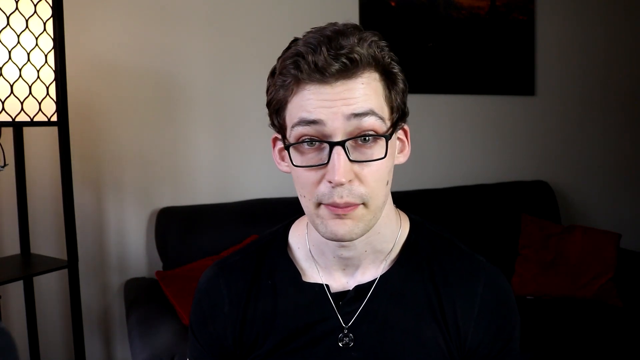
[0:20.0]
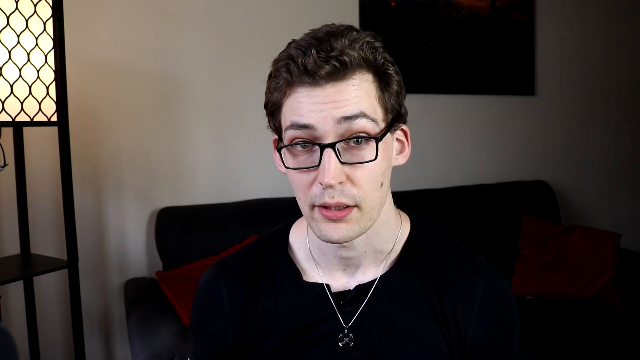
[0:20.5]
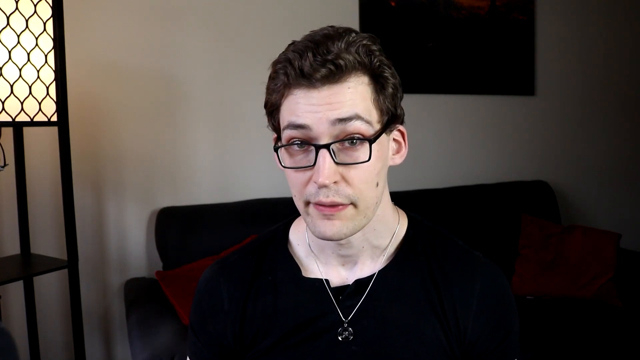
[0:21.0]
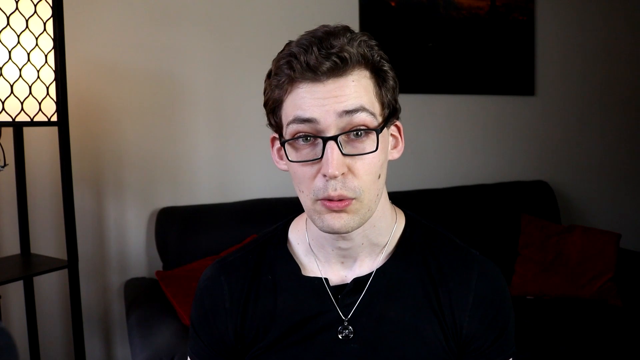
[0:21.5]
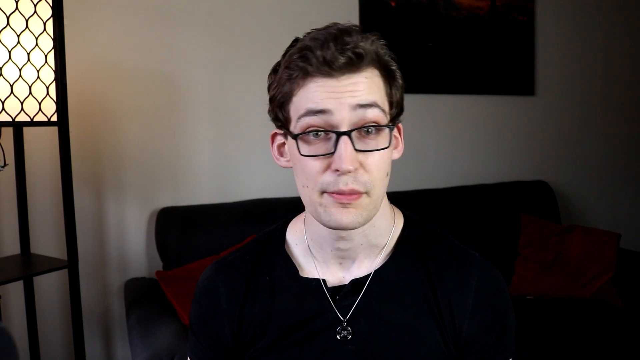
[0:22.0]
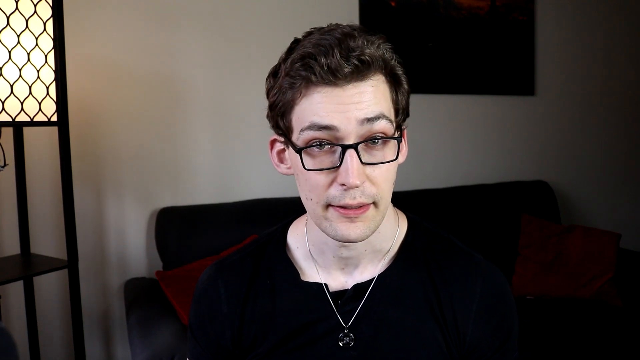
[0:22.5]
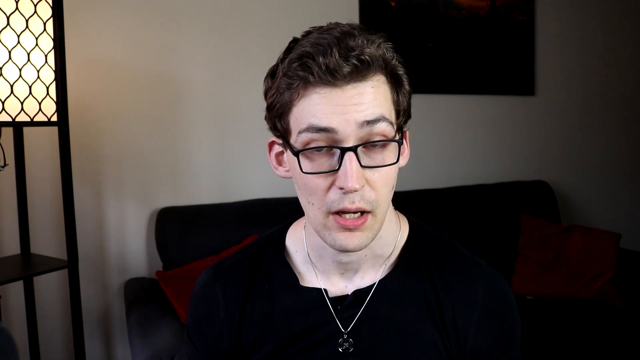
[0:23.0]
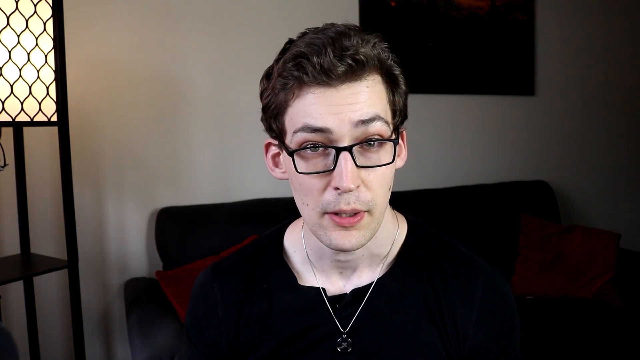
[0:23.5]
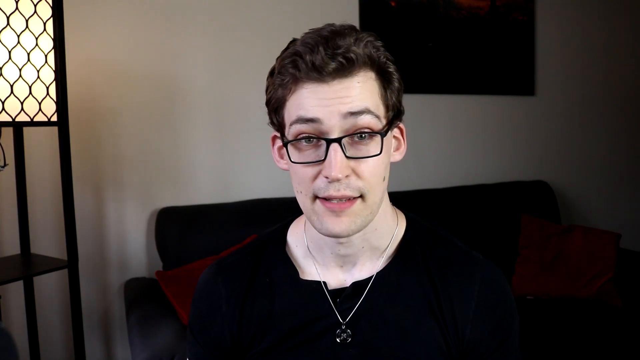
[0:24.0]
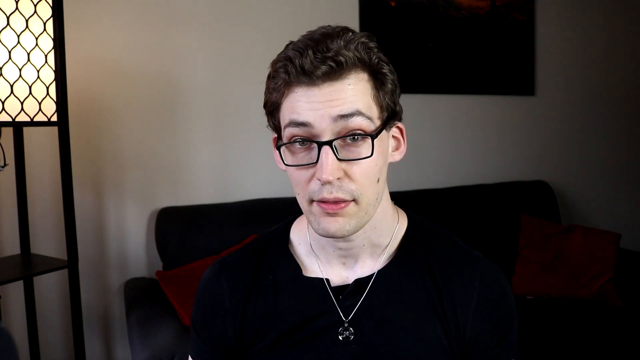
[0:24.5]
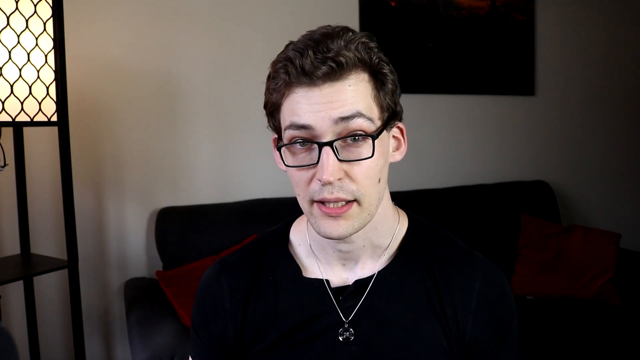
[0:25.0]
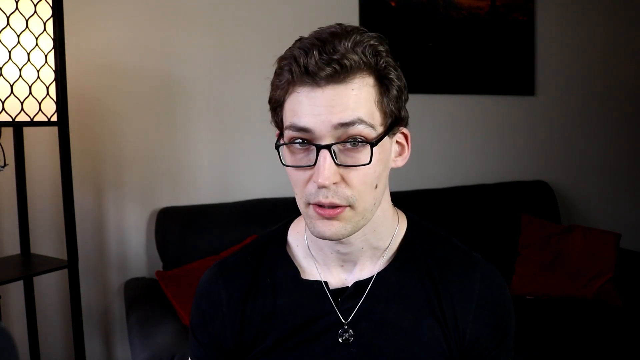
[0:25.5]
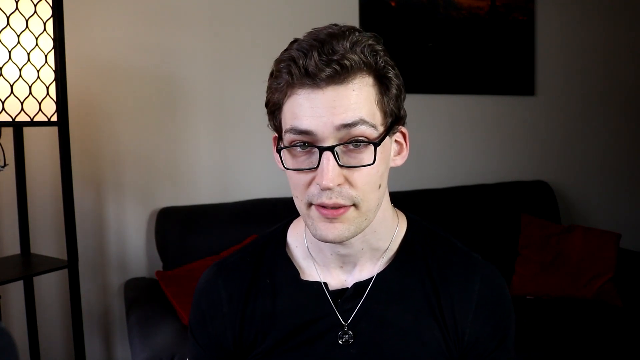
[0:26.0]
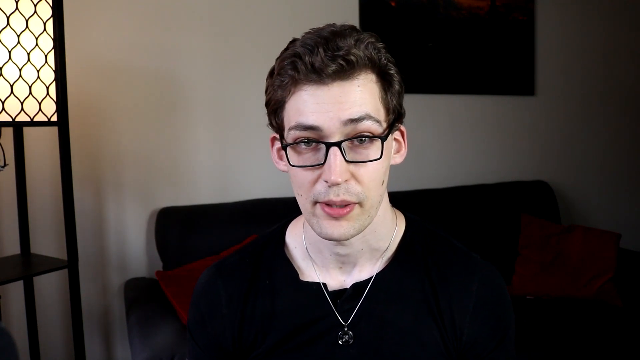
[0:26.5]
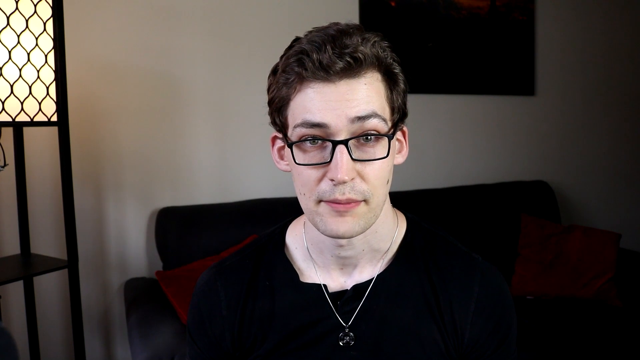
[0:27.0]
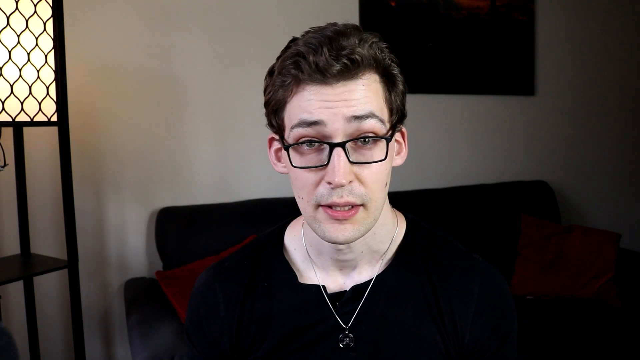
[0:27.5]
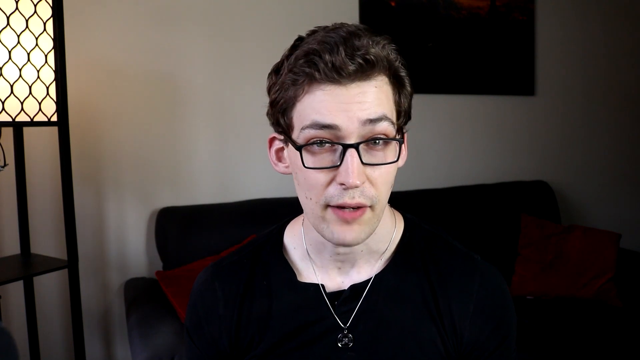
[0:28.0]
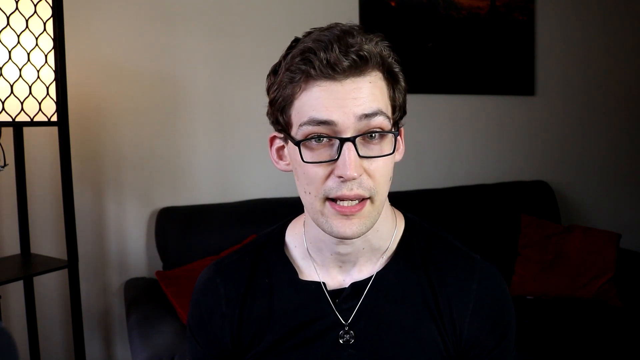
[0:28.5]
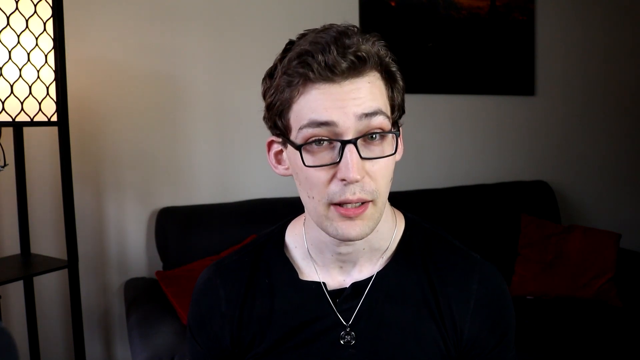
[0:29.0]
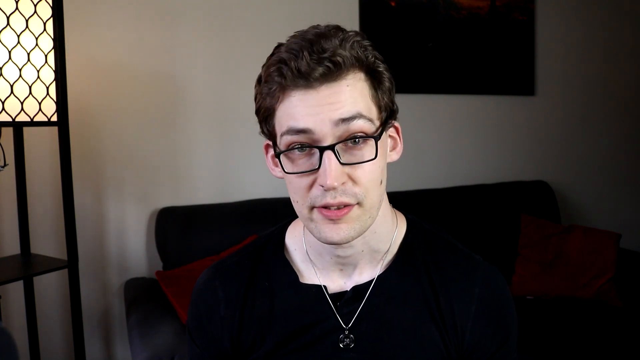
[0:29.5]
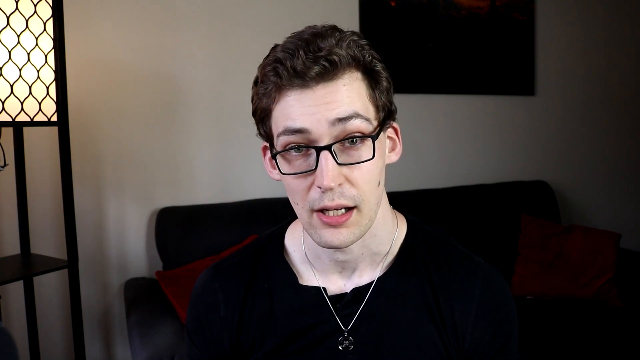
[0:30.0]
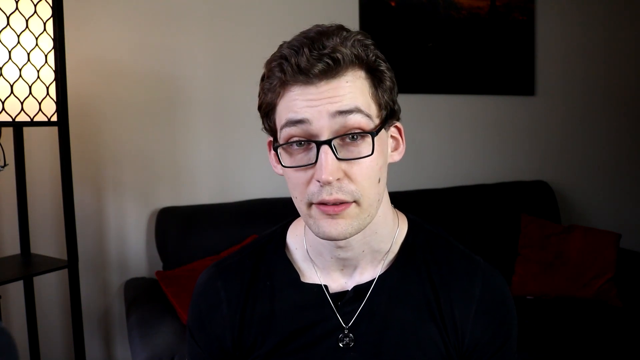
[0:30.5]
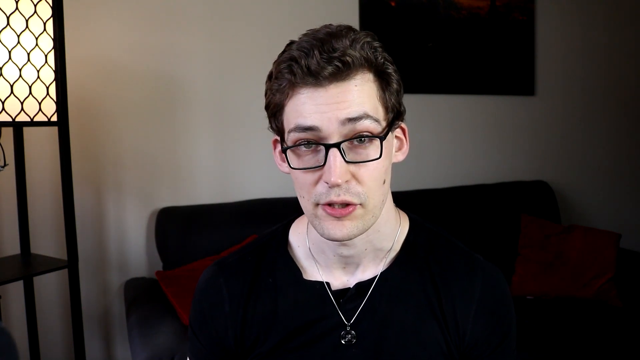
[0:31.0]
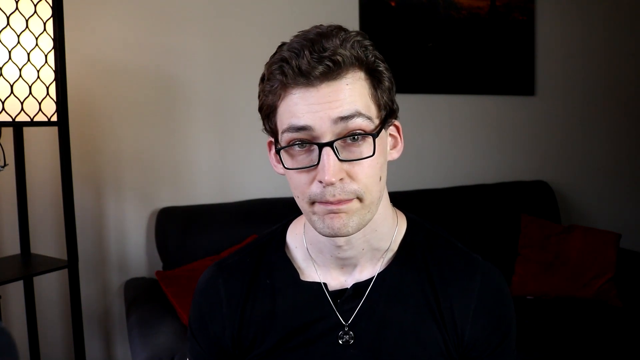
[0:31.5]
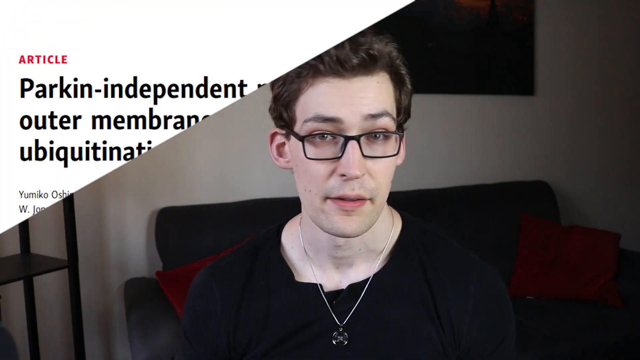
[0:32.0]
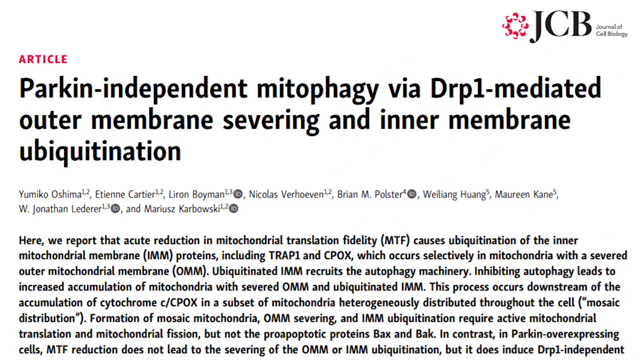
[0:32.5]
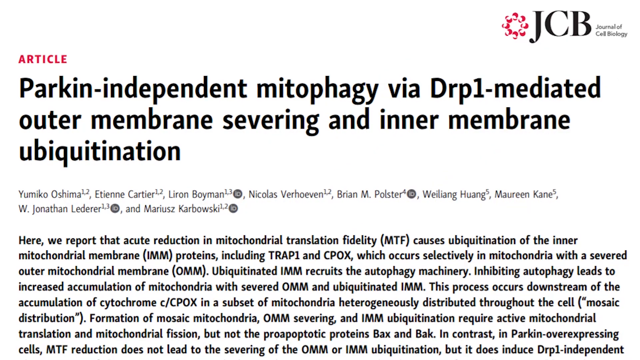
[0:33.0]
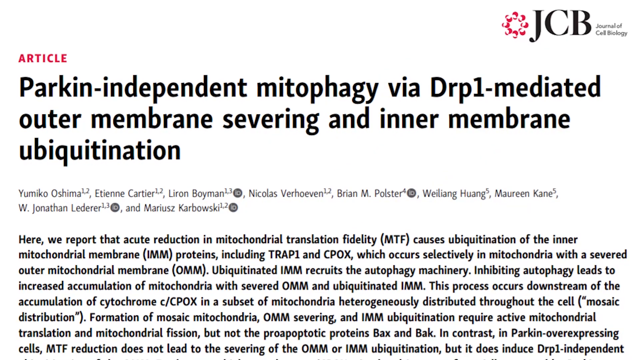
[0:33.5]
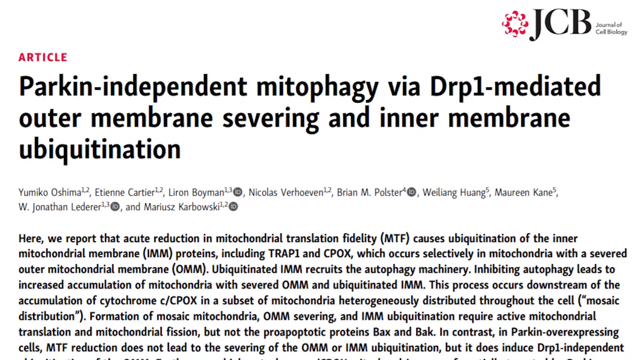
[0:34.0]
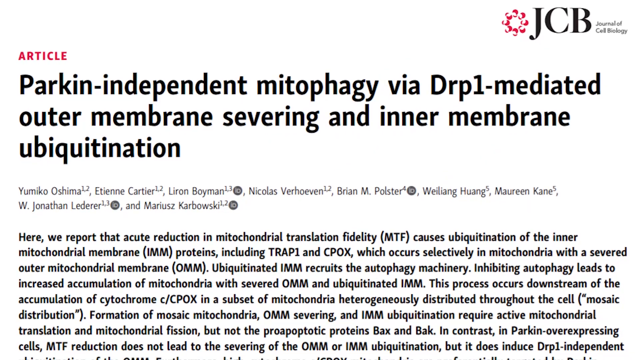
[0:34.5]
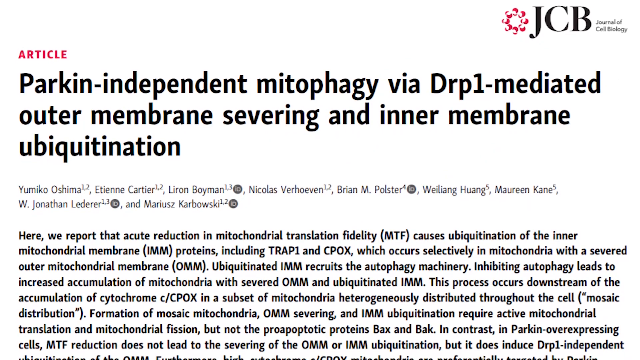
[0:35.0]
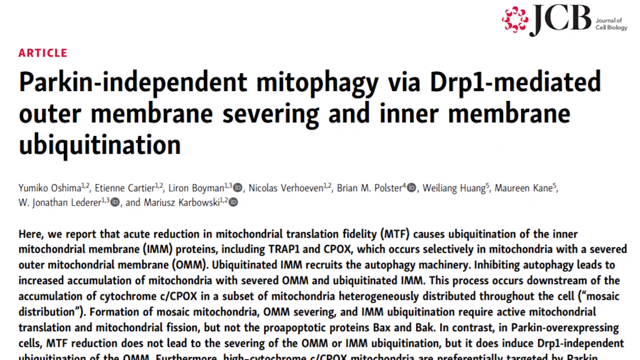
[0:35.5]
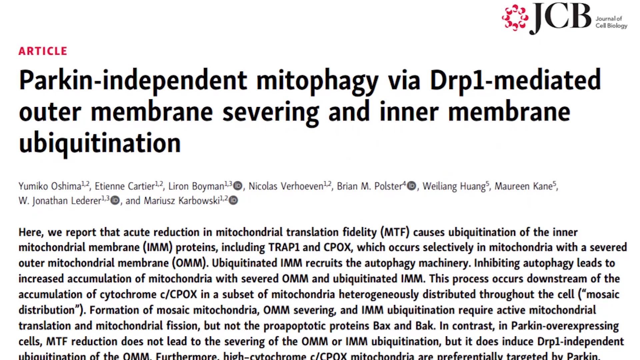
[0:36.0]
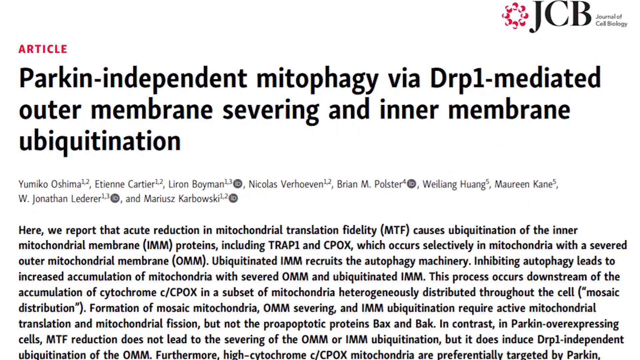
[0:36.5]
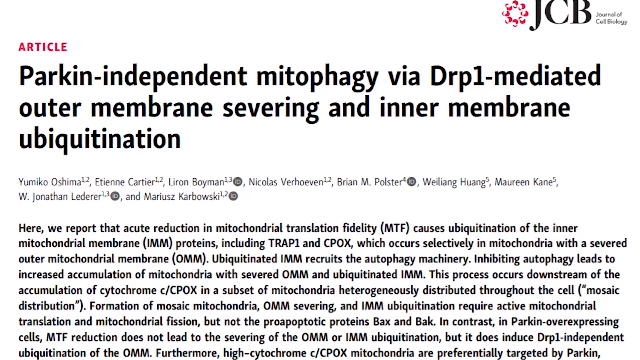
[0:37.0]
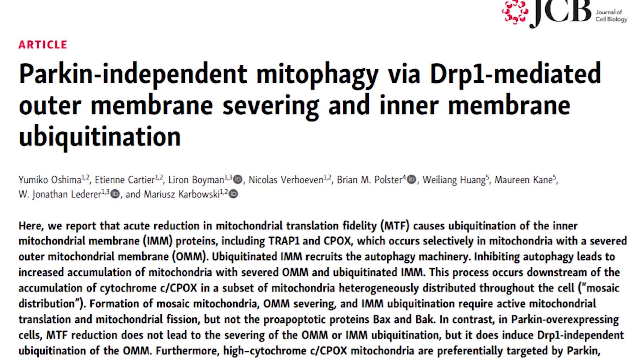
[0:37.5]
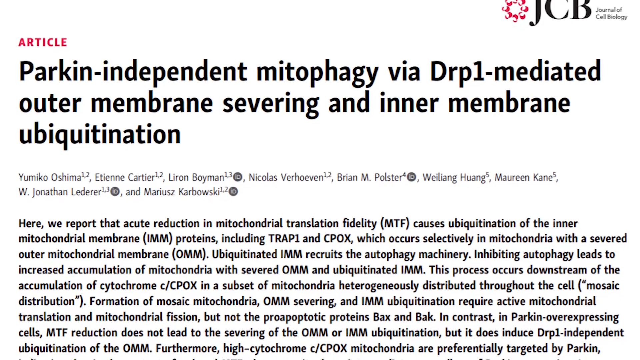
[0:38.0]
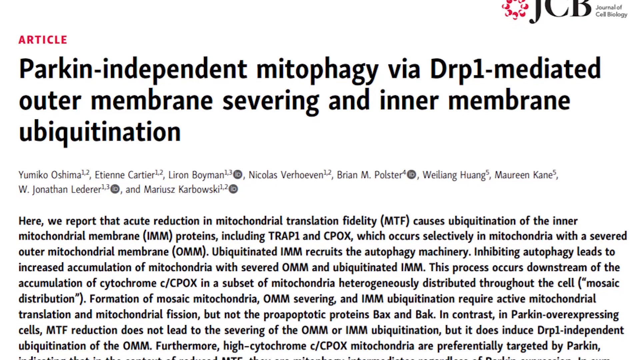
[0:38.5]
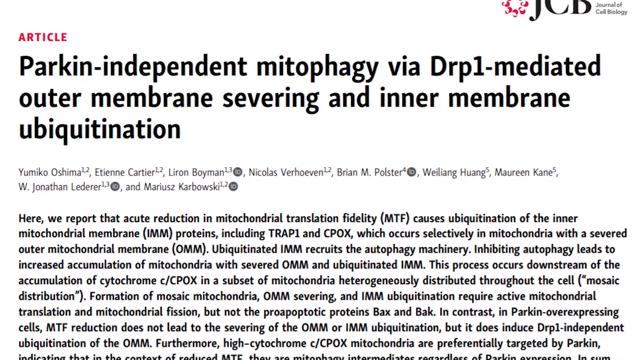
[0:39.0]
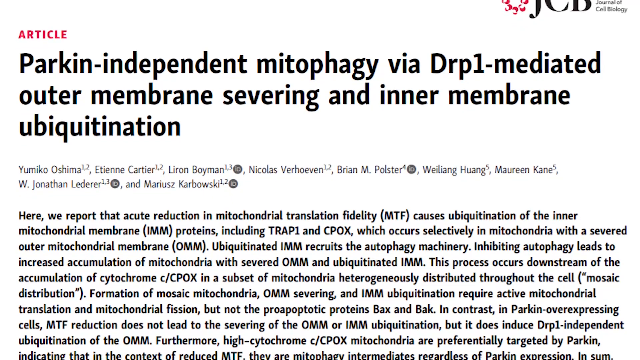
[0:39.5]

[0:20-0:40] The video transitions to what looks like an article about Parkin-independent mitochondrial degradation via "DRP1-Mediated Outer Membrane Severing and Inner Membrane Ubiquitination." It looks to be a dense biological article, and the presenter's name appears among its authors. The text looks like a report on the reduction of mitochondrial translation fidelity caused by ubiquitination of inner mitochondrial membrane proteins.